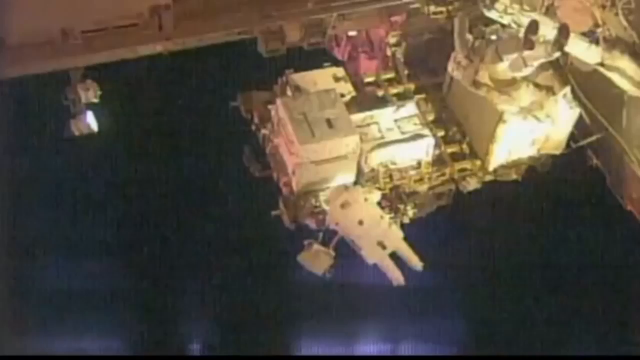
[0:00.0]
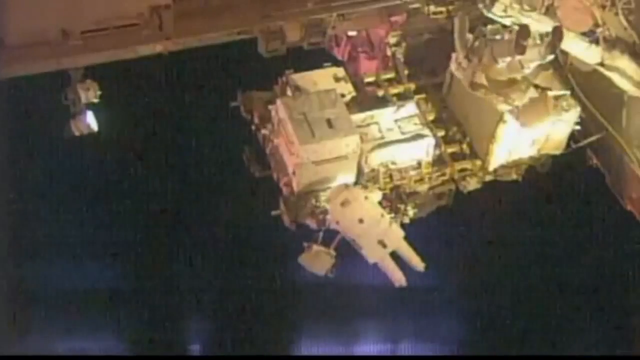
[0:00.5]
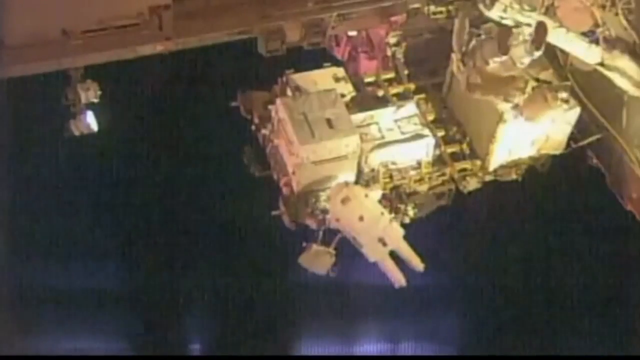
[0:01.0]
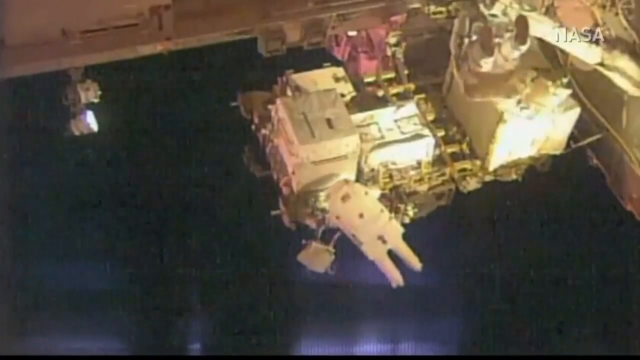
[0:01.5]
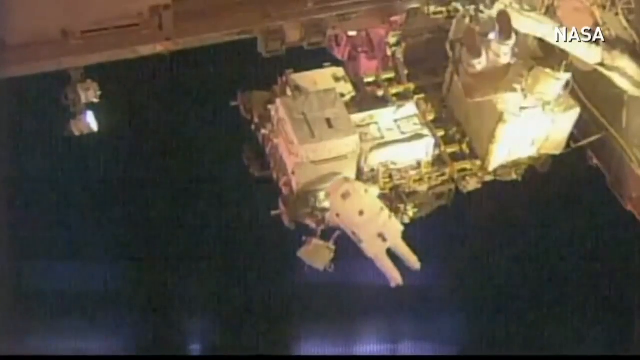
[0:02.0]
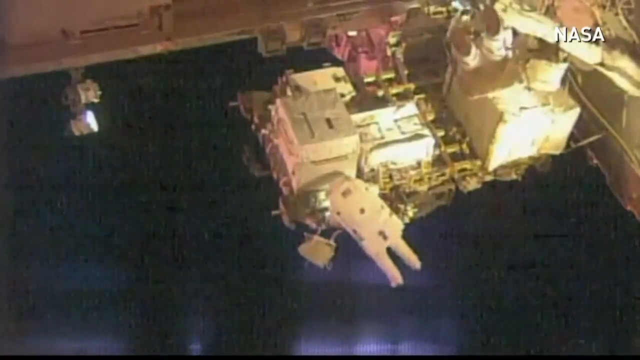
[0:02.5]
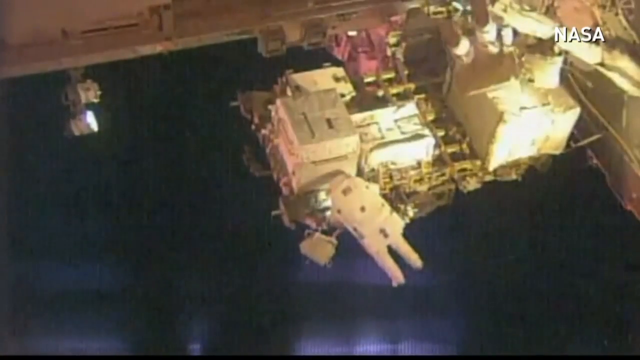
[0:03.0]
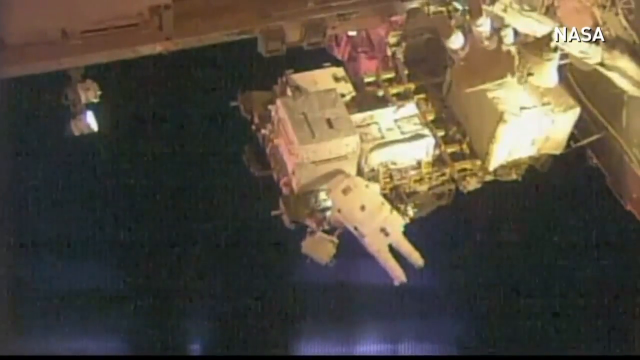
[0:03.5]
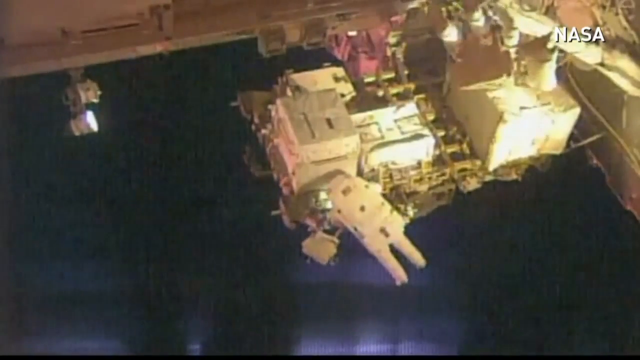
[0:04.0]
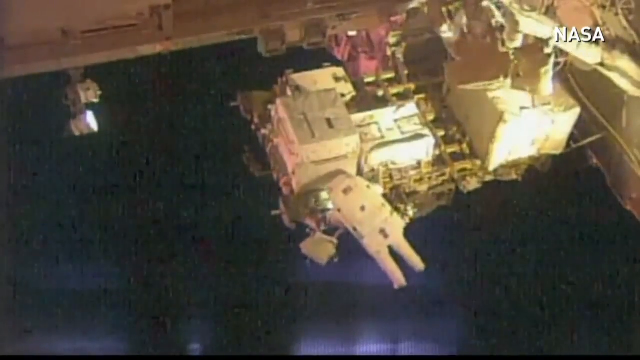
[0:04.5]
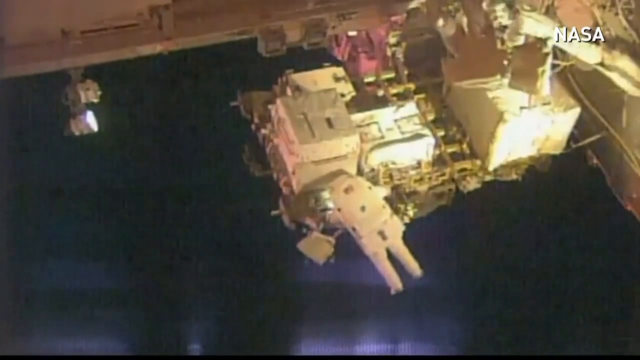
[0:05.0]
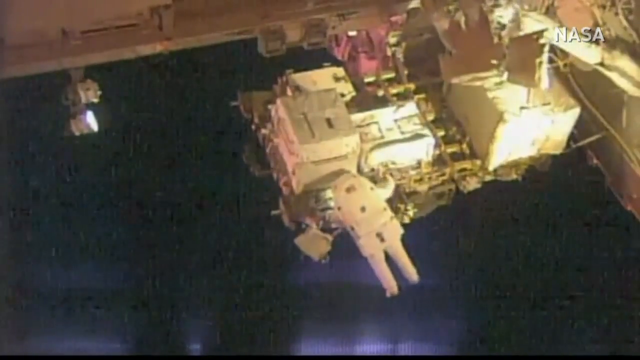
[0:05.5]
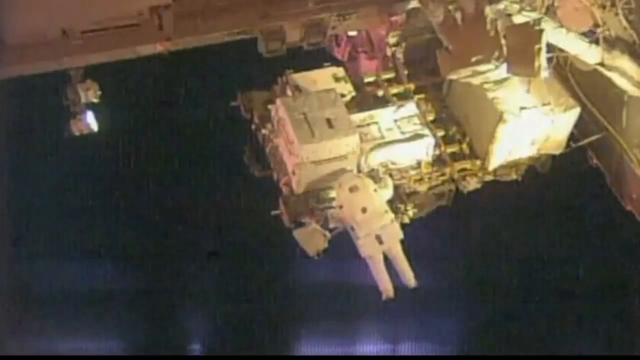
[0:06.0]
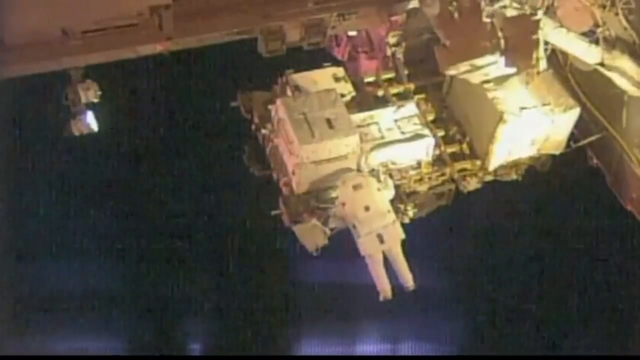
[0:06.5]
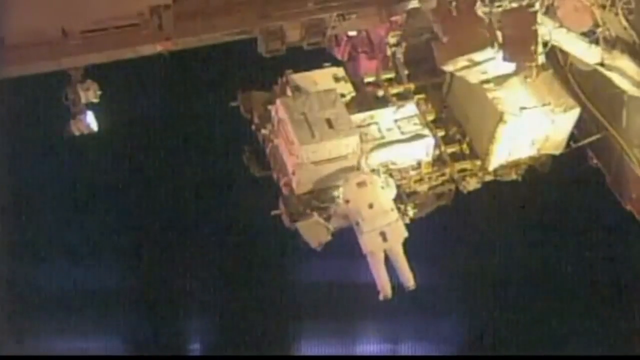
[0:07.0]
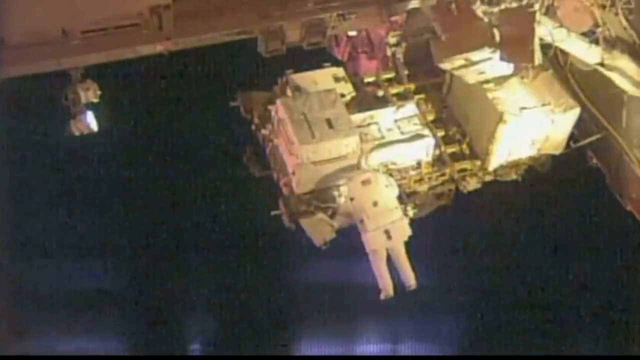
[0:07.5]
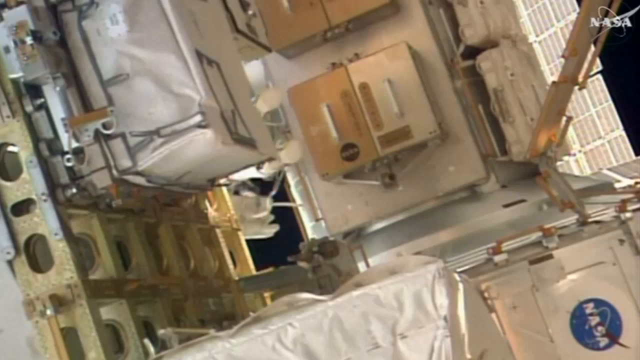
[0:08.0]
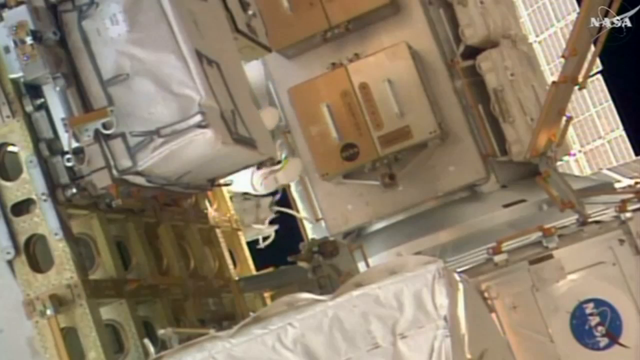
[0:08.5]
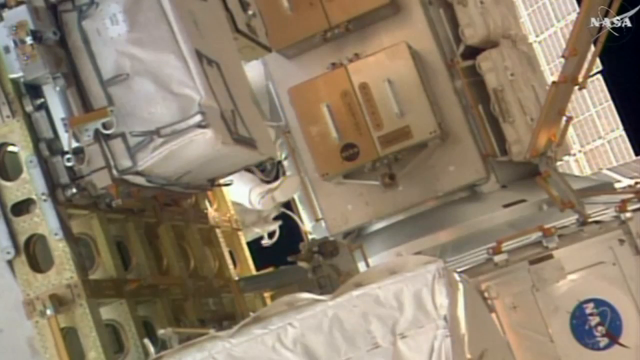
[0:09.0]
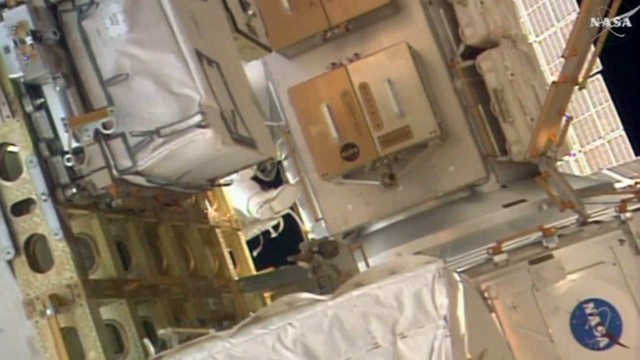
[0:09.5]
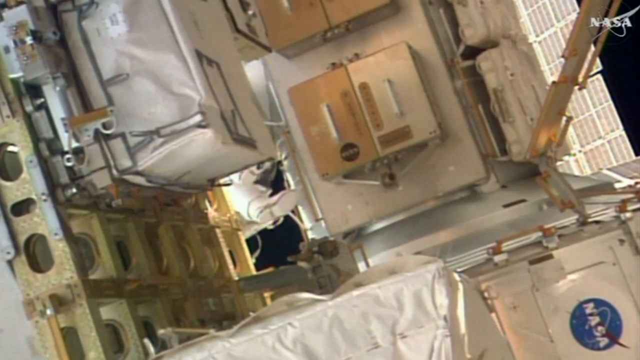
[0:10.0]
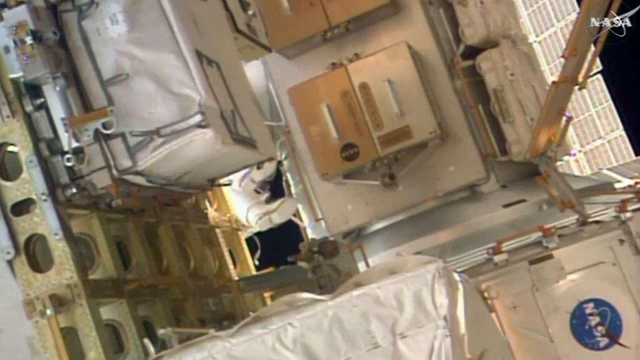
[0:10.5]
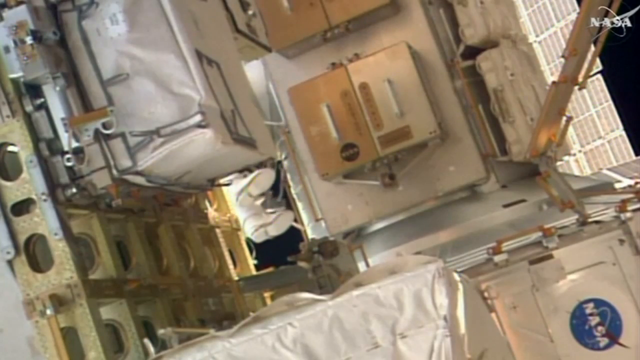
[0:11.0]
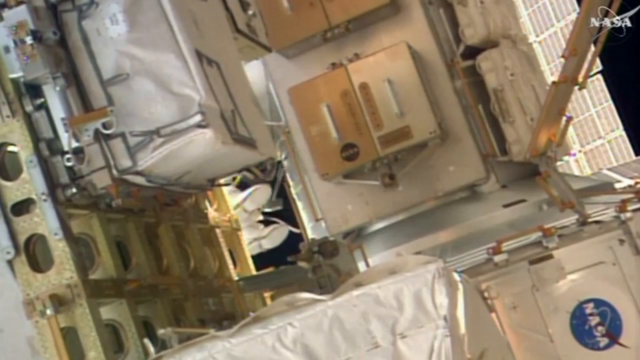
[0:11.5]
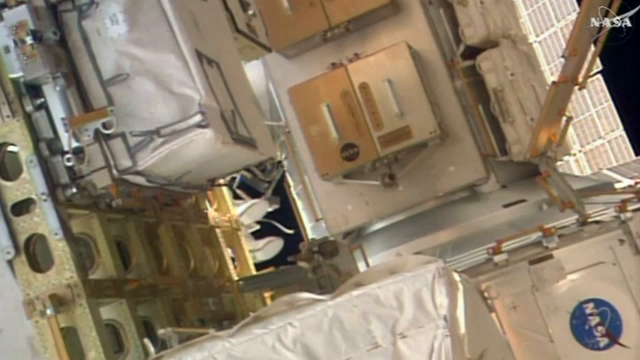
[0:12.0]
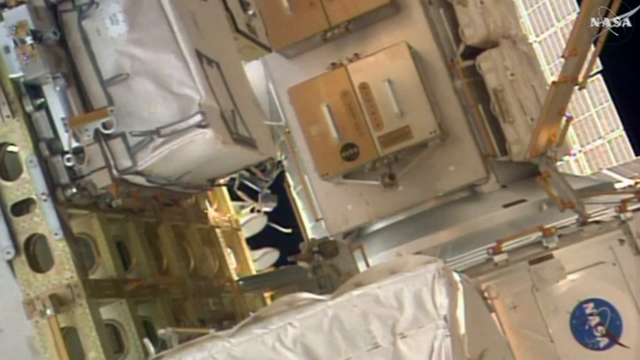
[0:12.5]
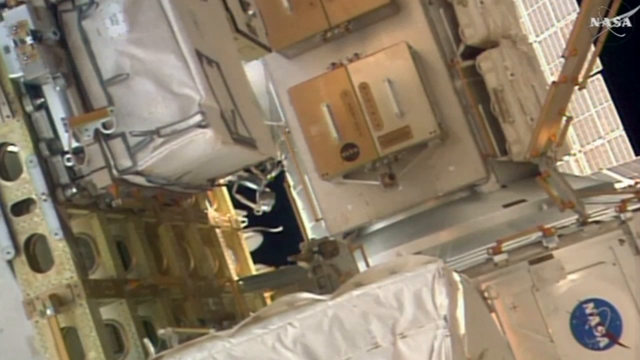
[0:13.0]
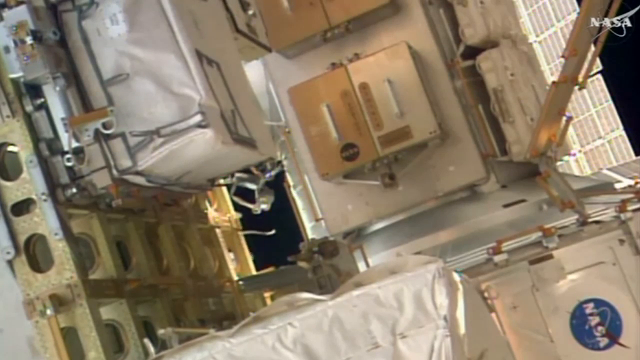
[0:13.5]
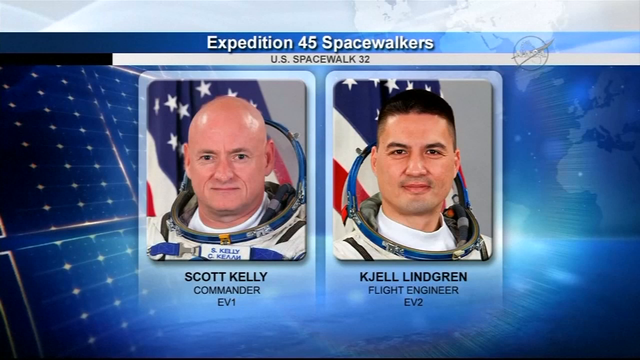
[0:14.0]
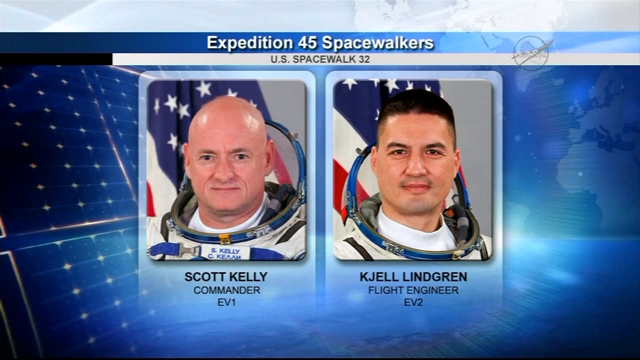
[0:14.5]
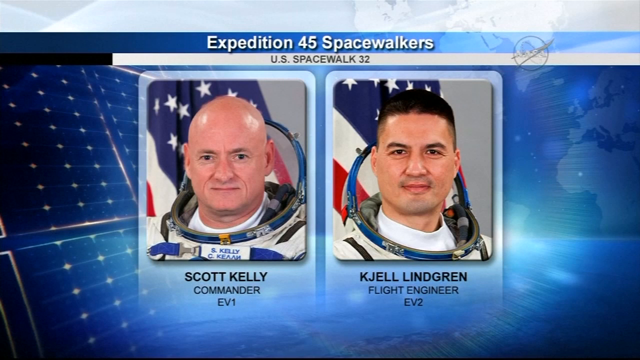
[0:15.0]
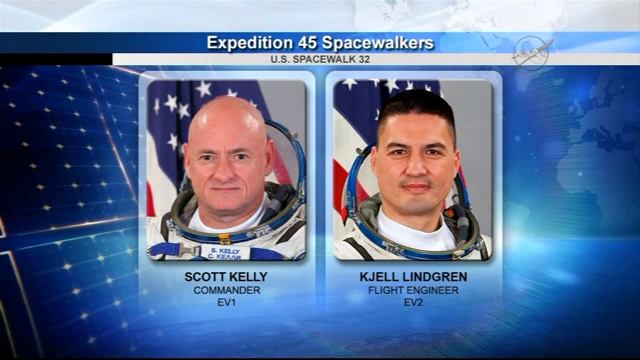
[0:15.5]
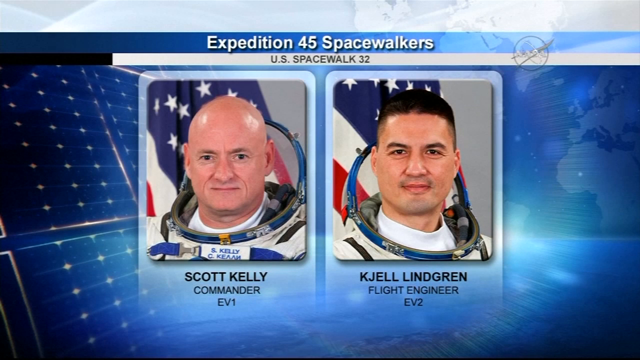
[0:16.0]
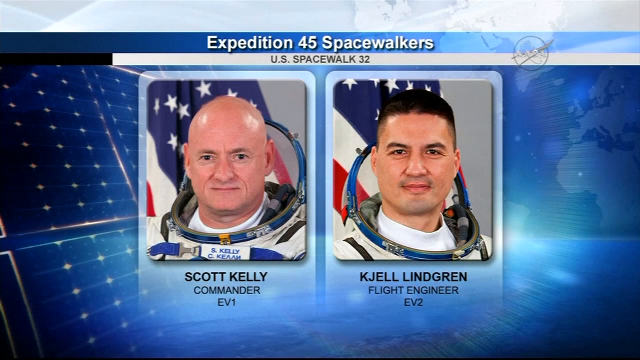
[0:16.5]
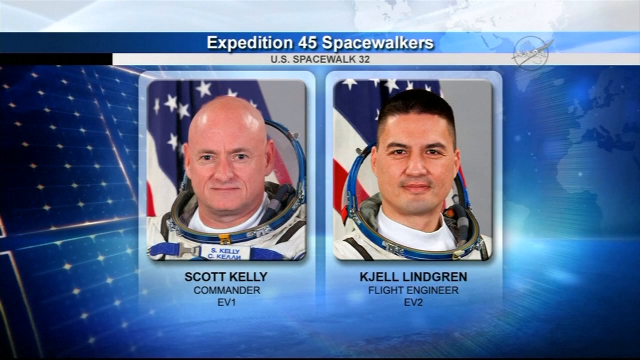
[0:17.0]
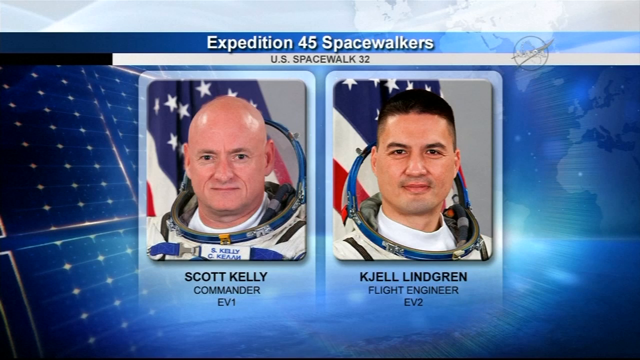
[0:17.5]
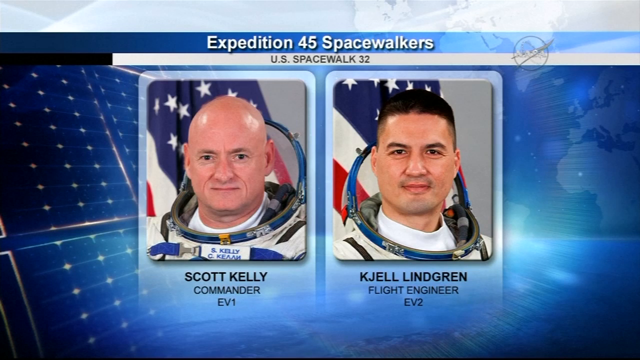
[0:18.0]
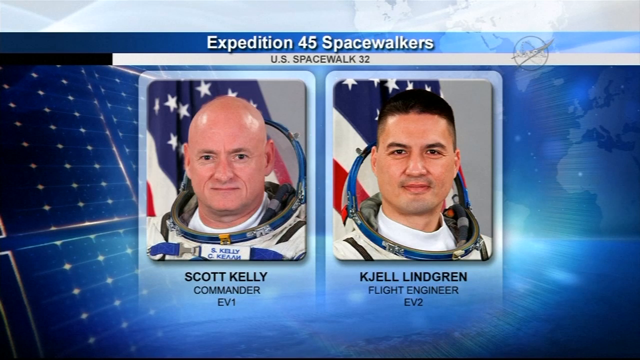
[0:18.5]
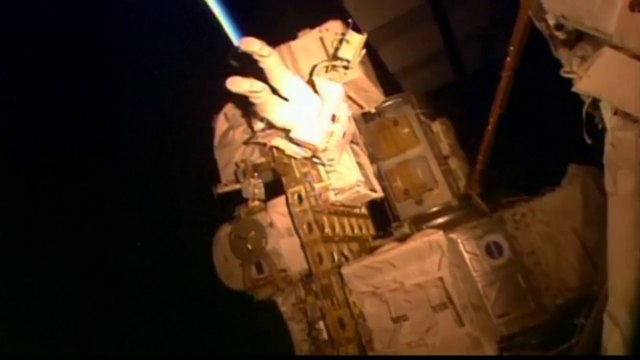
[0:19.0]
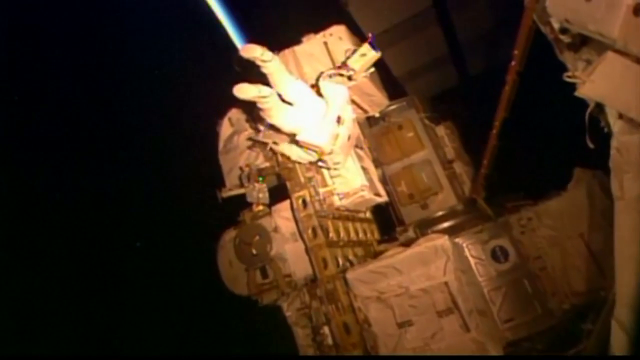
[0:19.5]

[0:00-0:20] Two astronauts in suits work on a large white structure in space. One arm of the structure runs across the top of the screen and another across the right side, with a panel connected to these two arms. One astronaut faces away from the camera, working on that panel. The other has his back toward the bottom of the screen and is slowly moving toward the screen as the video begins. The video cuts to a view from inside the structure, looking down onto white boxes with handles. Through a hole in the structure, the feet of an astronaut suit are visible; they slowly rotate until they are no longer visible through the hole. This fades out to a slide with a blue background and a space-like image, with two pictures of the astronauts in the center. On the left is Scott Kelly, the commander; his head is visible and he is bald, with an American flag behind him. On the right, with the same background, is Kjell Lindgren, who has dark hair. Both are shown with their suit collars but with the helmet off, so their heads and faces are visible.